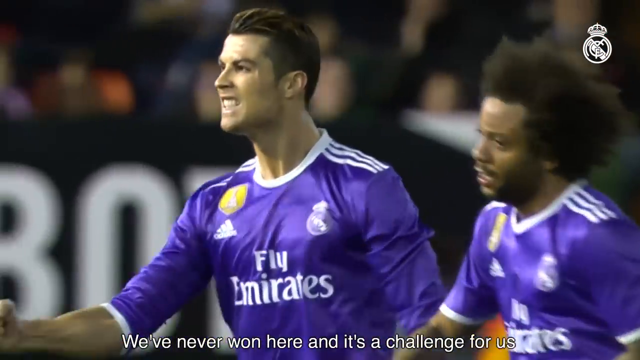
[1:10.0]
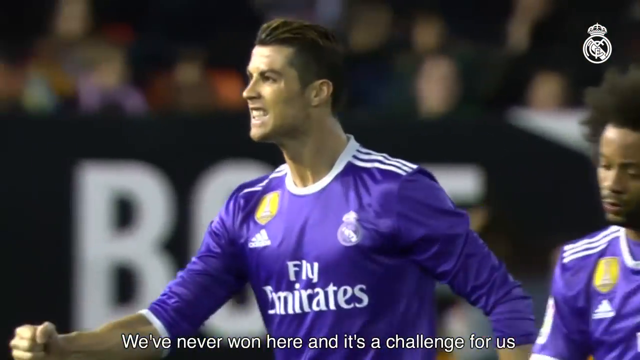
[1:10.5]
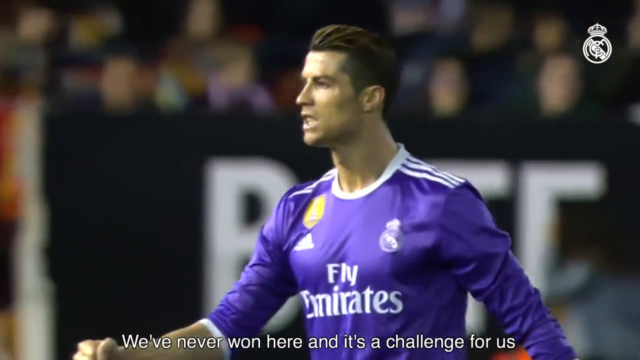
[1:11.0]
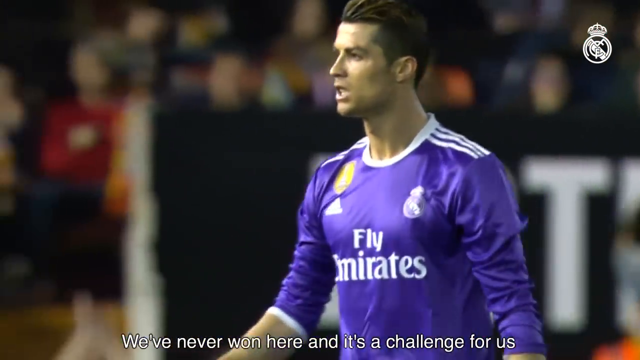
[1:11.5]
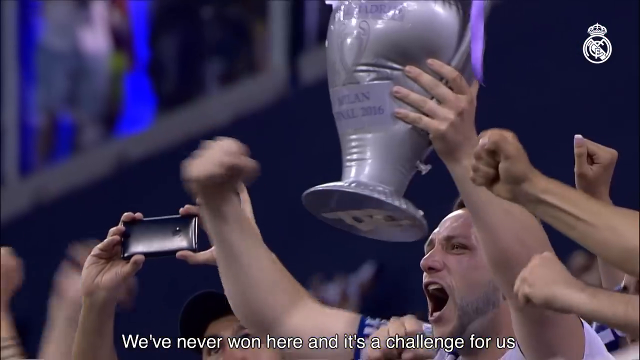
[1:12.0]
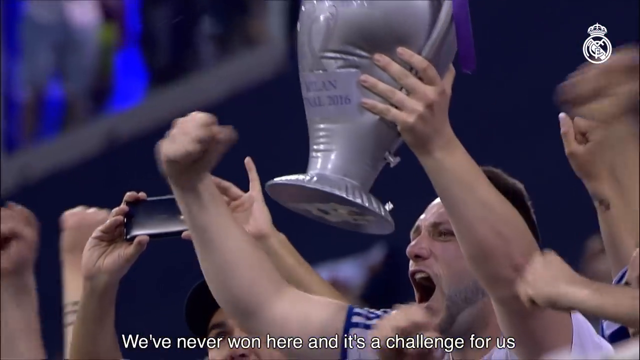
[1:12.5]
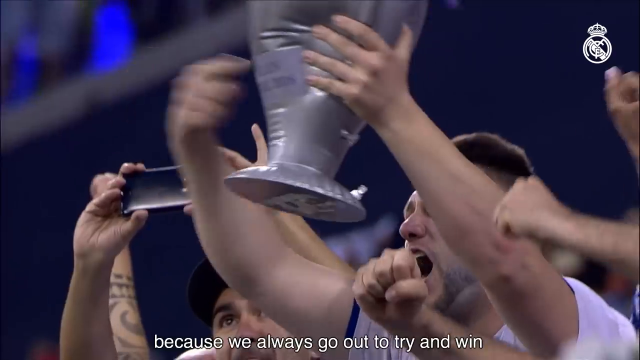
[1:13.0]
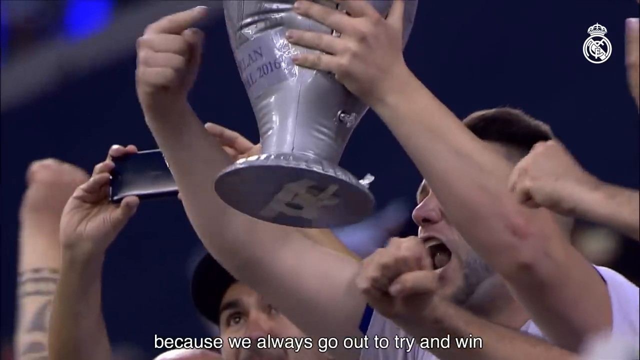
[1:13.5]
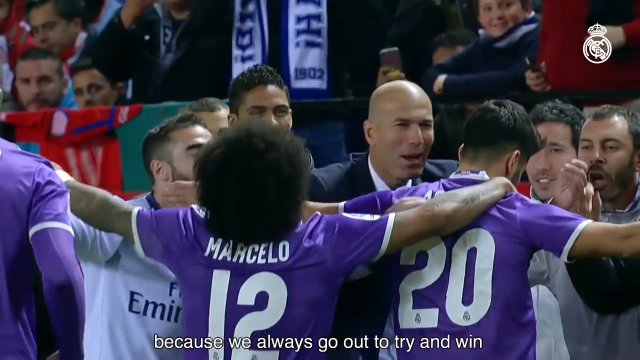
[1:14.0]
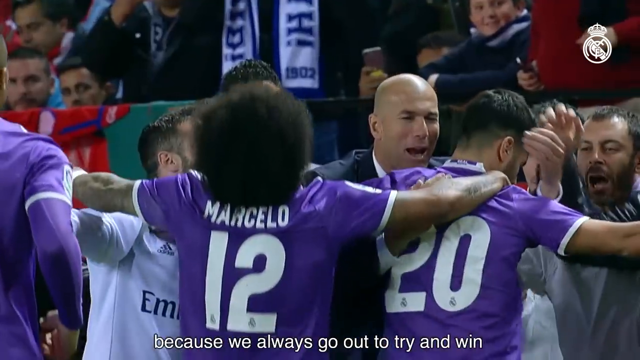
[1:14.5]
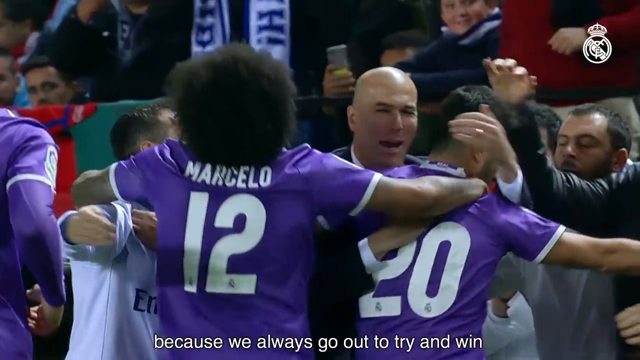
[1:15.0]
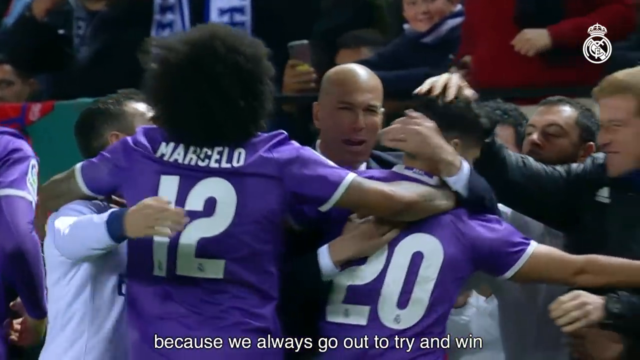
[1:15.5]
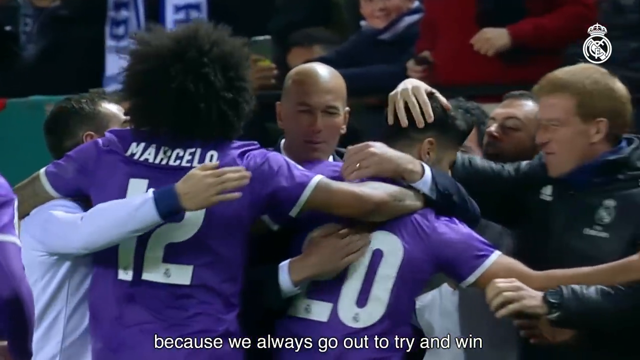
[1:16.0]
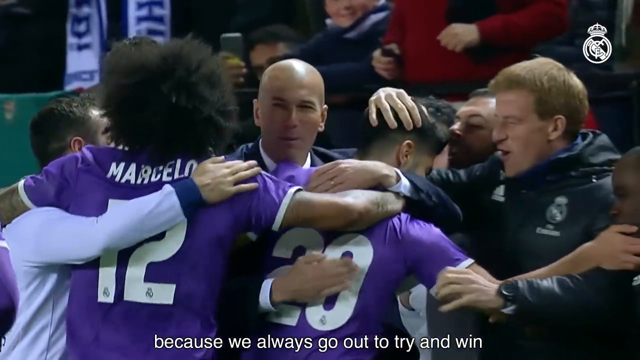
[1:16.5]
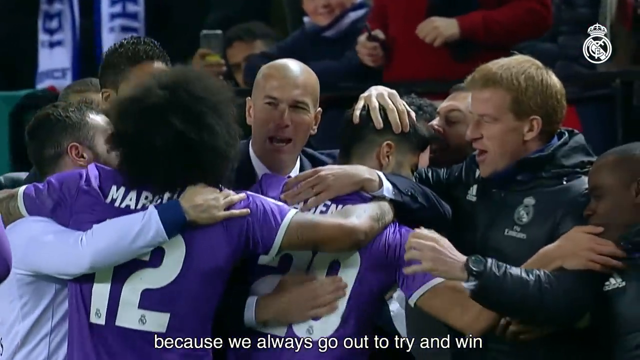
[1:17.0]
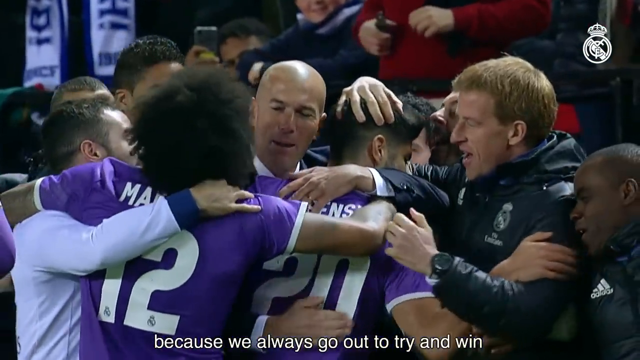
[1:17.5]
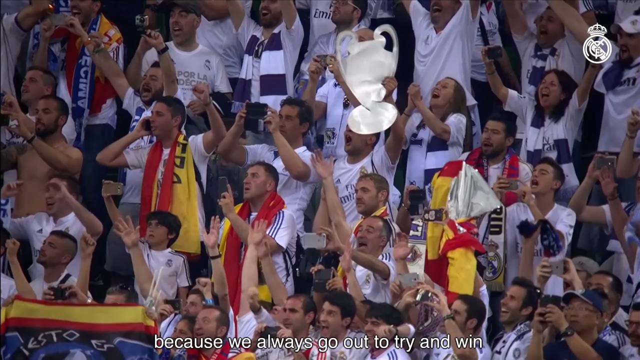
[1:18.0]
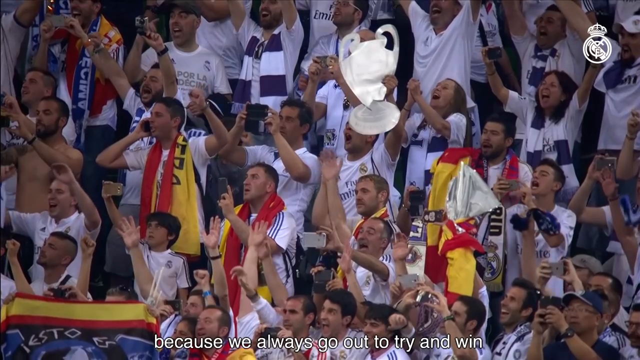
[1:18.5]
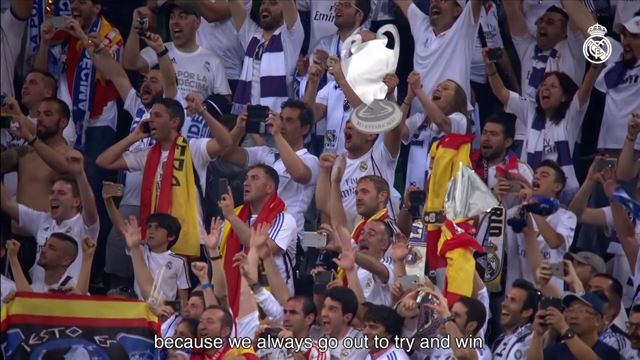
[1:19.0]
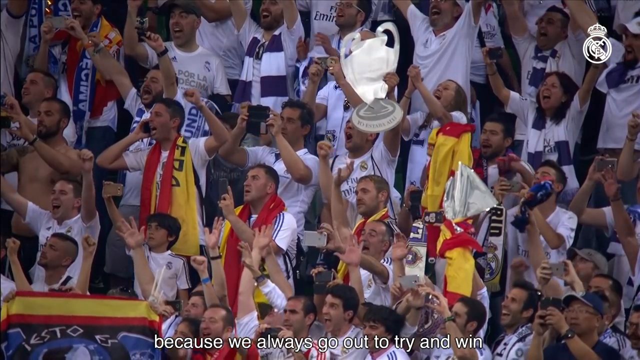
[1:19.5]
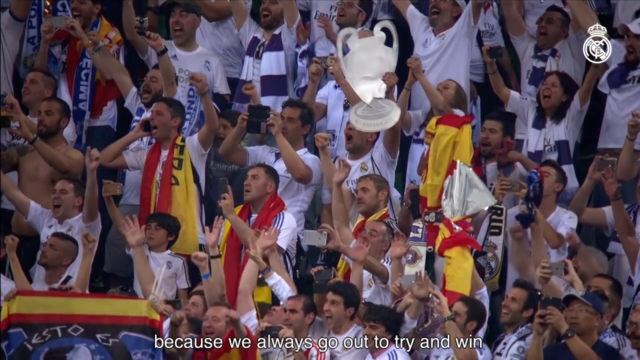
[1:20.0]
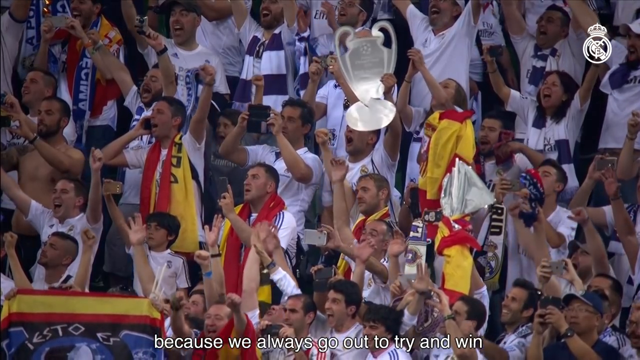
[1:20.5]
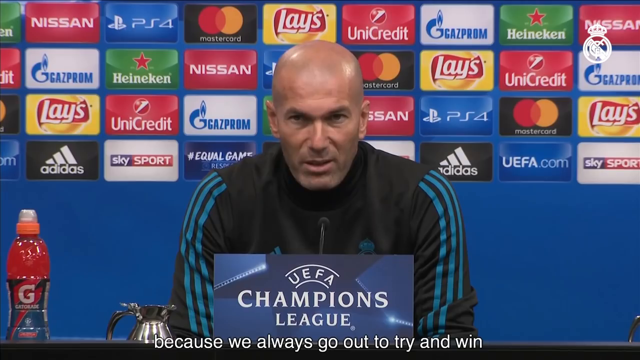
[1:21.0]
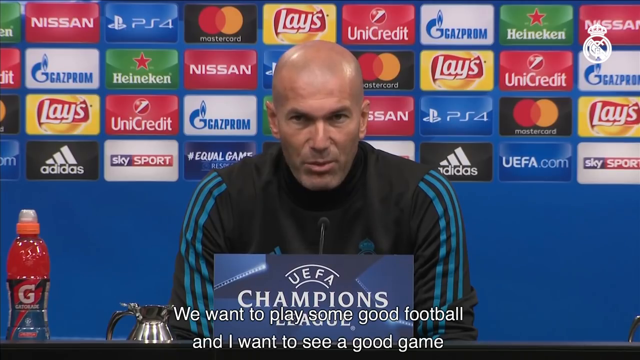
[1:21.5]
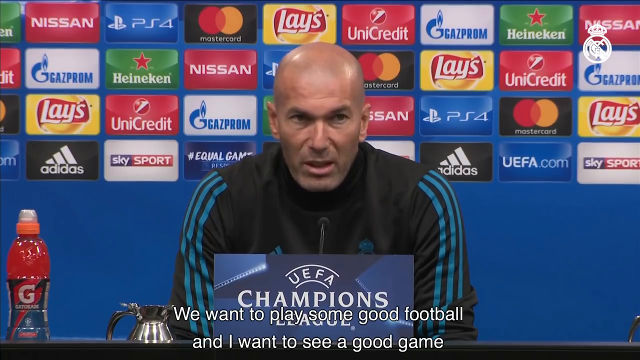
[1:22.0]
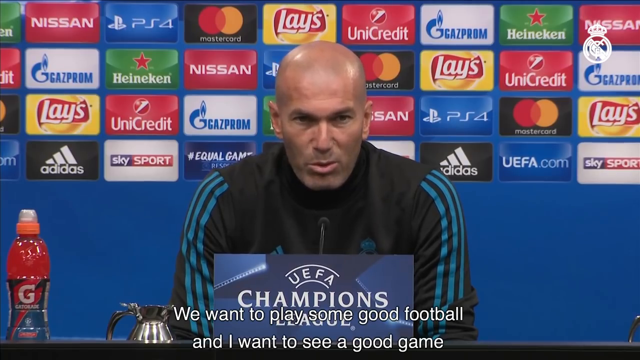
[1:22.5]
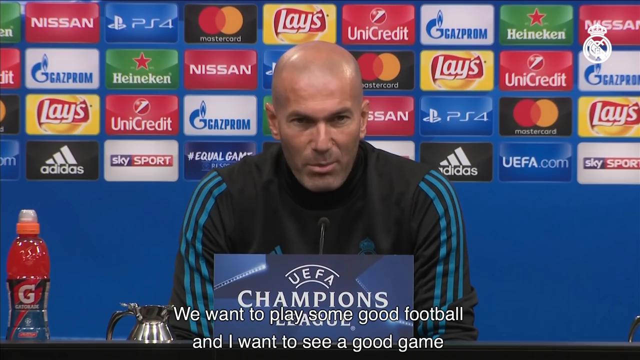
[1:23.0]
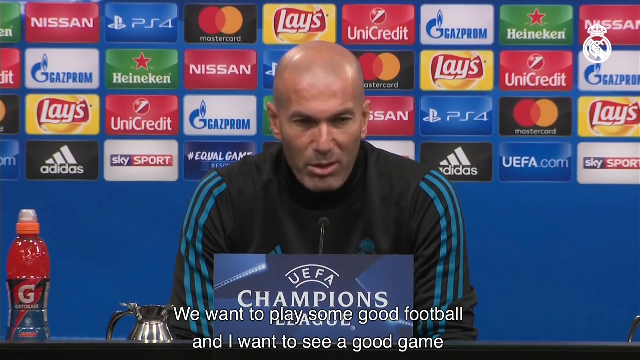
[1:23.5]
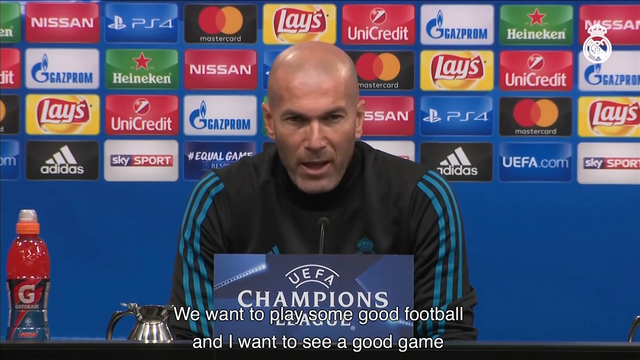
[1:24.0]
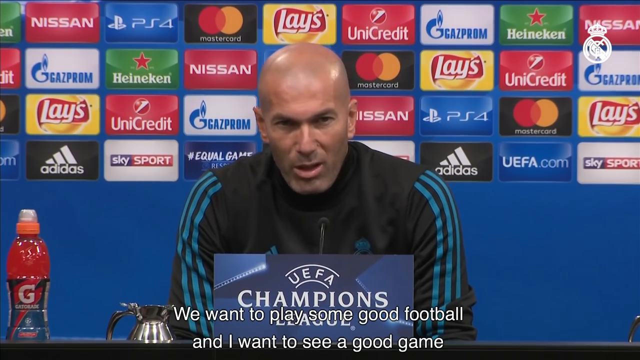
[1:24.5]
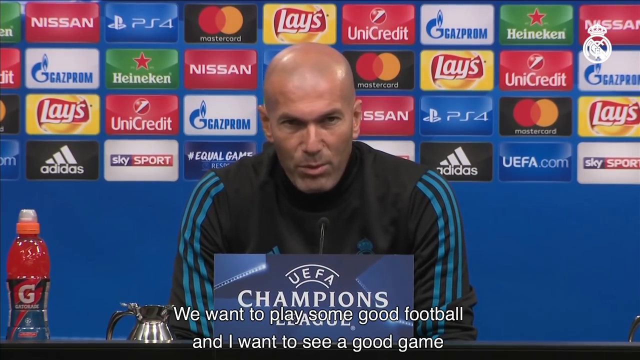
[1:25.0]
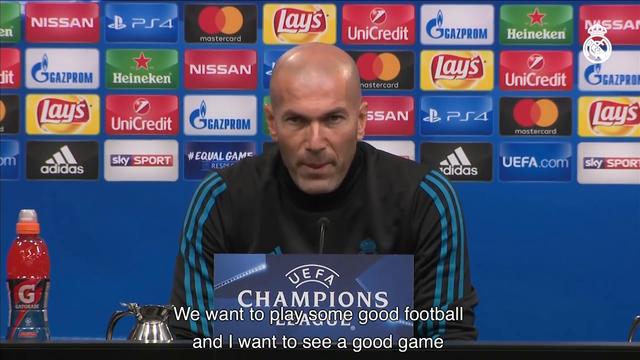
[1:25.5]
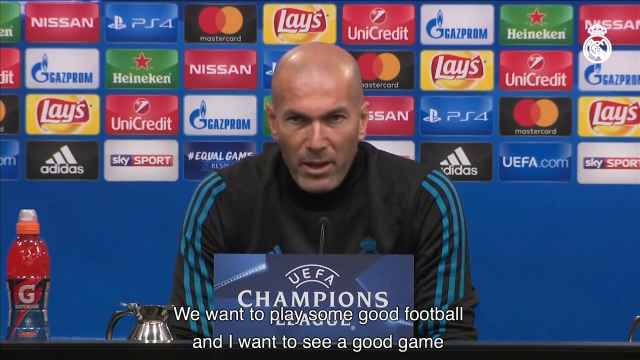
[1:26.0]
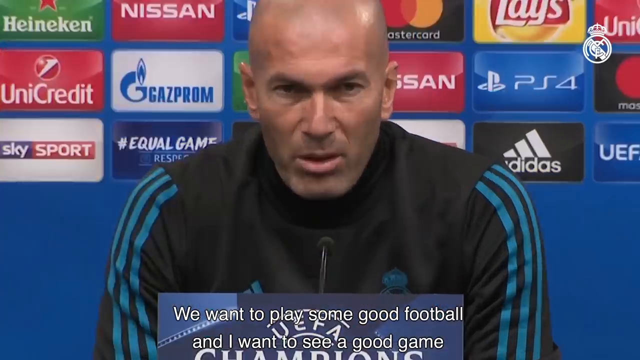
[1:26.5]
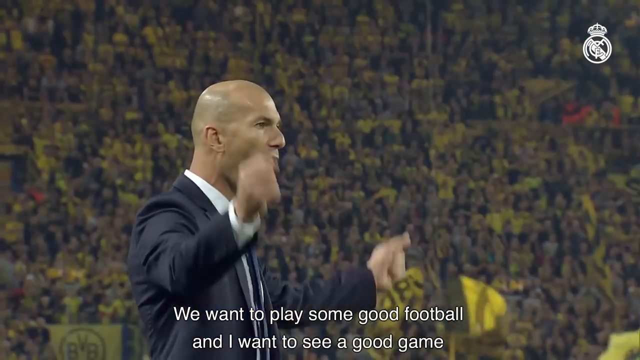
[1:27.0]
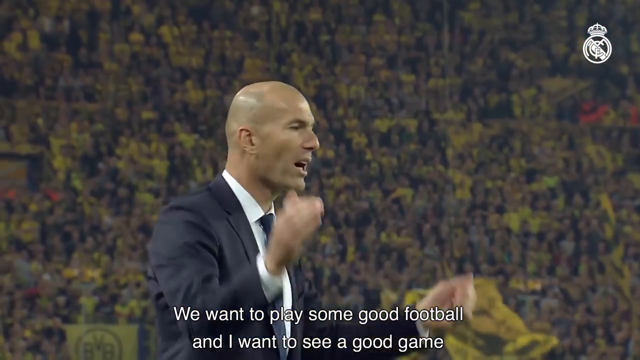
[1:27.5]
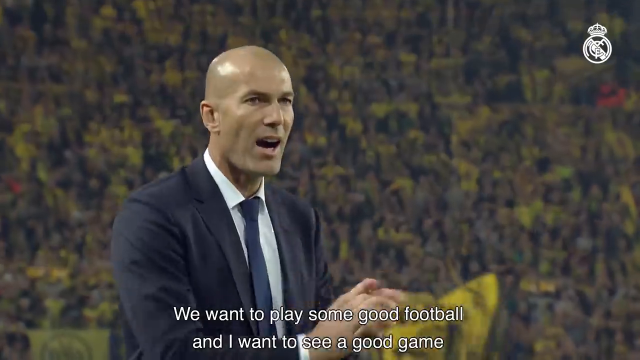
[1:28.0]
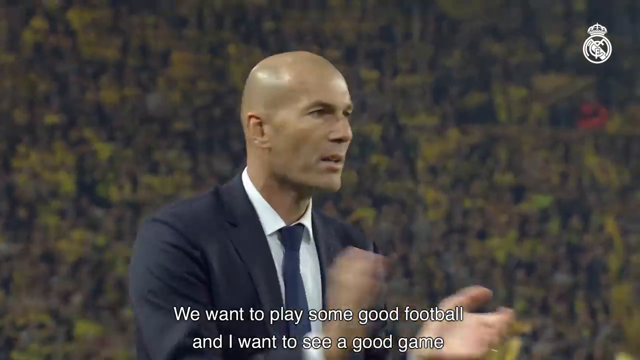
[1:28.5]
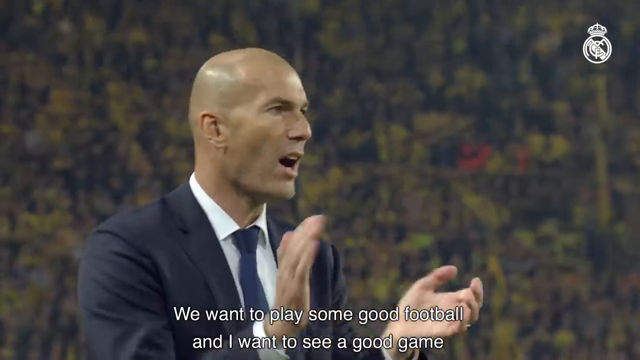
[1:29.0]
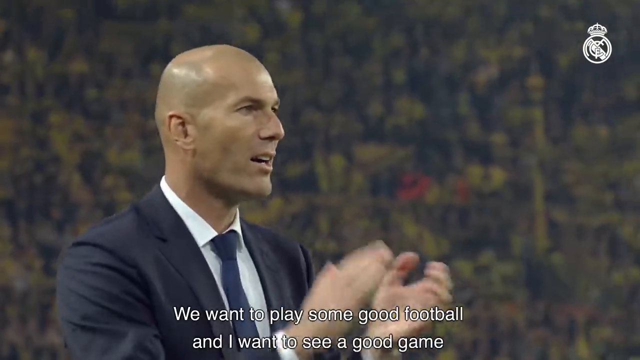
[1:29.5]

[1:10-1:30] Various clips show celebrations during a game, in slow motion. Fans celebrate, and players wearing blue jerseys hug and jump around. More slow-motion clips show fans watching the game, and the video transitions back to the tracksuit-wearing man at the press conference. The same man is also shown in clips wearing a suit on the sidelines of the pitch; he is presumably the coach of the team. Some of the fans in the stands wear white football jerseys that say "Fly Emirates" on the front.